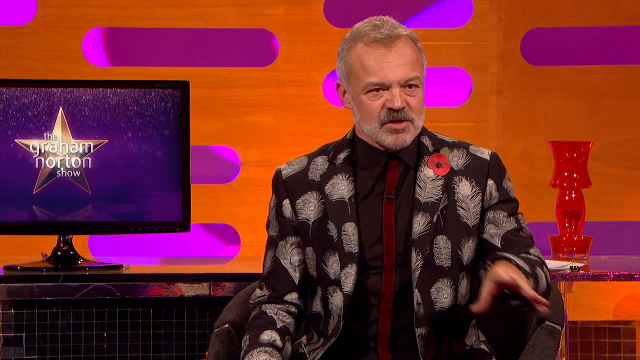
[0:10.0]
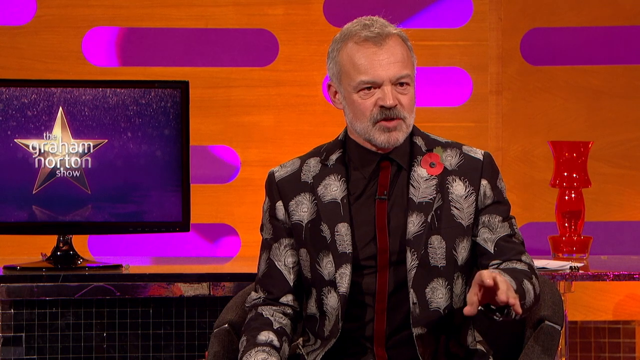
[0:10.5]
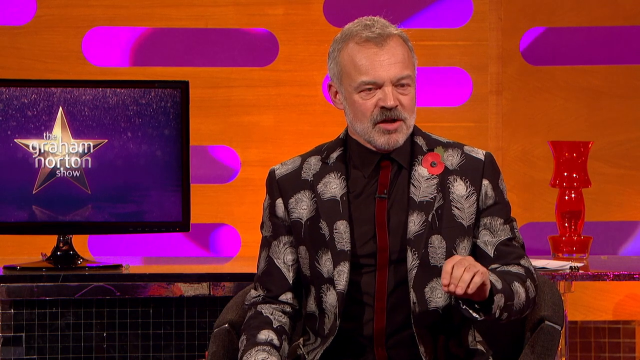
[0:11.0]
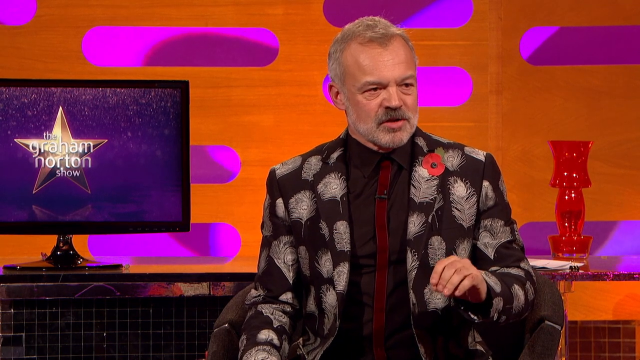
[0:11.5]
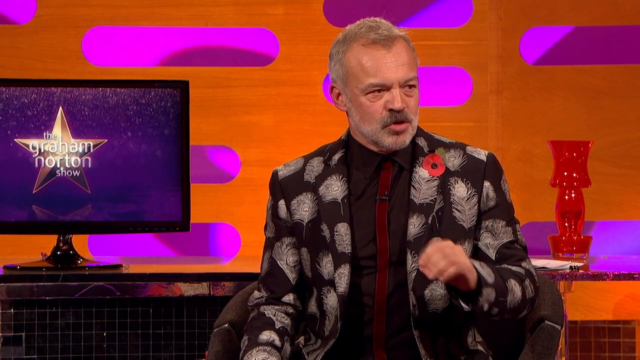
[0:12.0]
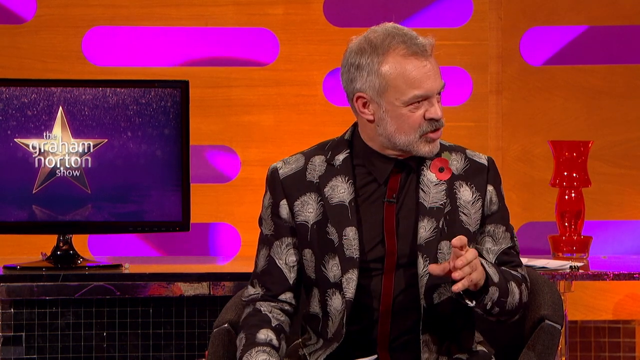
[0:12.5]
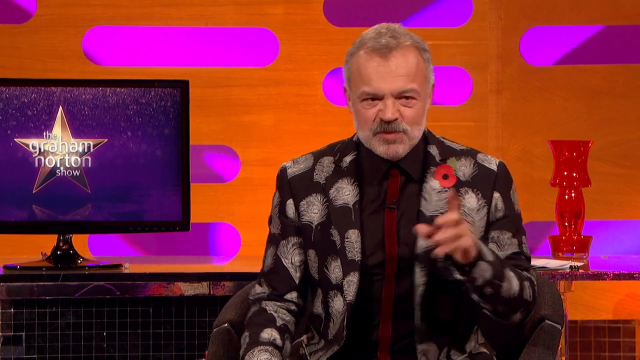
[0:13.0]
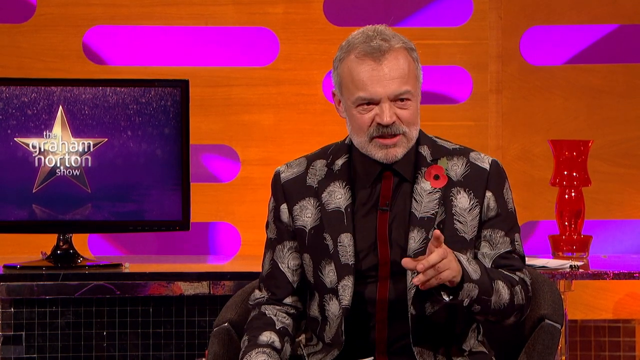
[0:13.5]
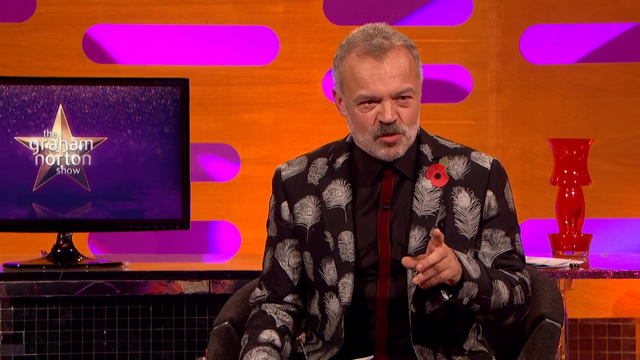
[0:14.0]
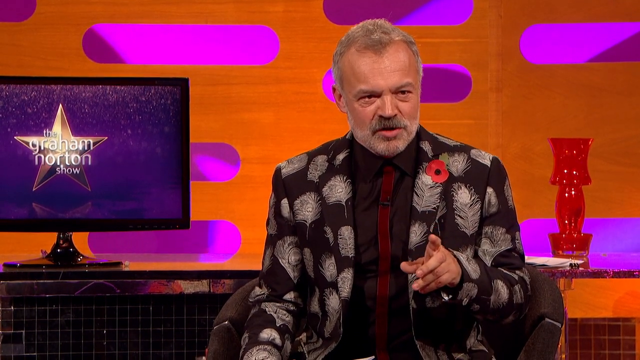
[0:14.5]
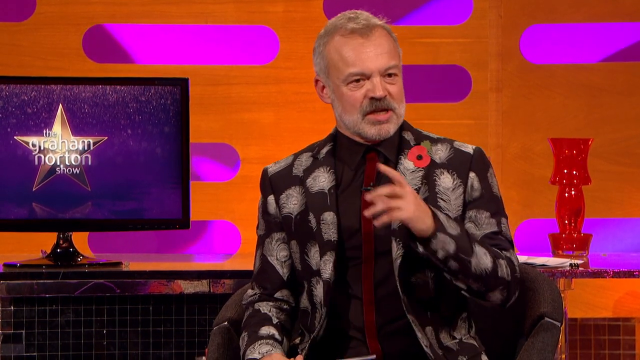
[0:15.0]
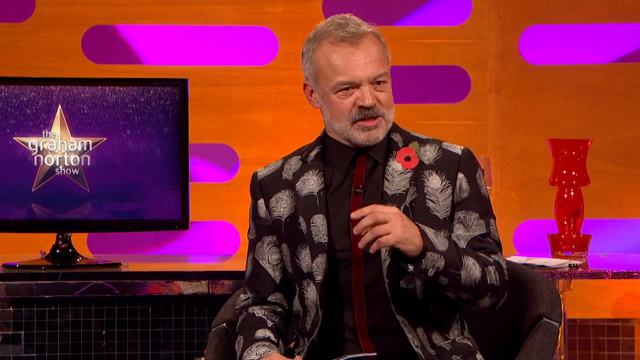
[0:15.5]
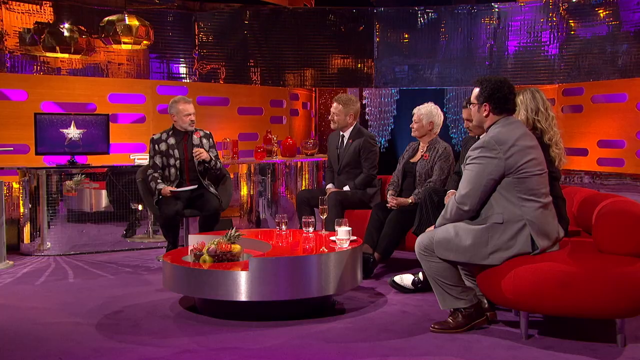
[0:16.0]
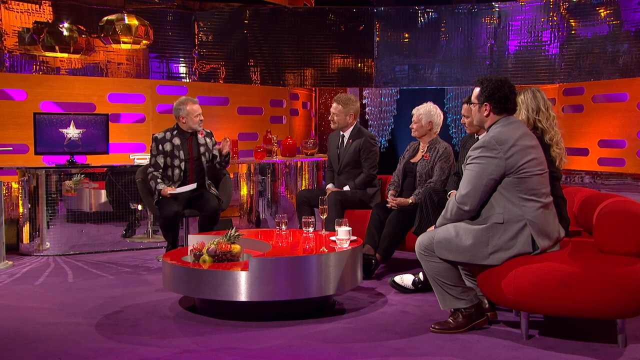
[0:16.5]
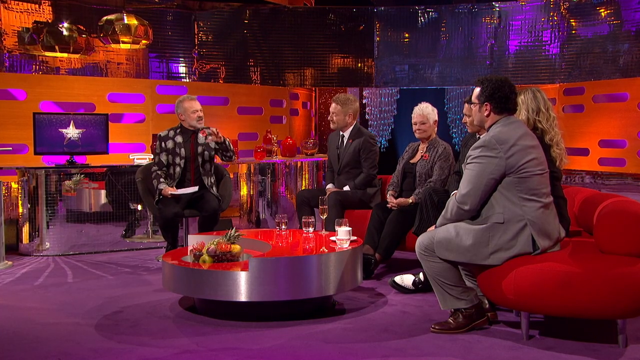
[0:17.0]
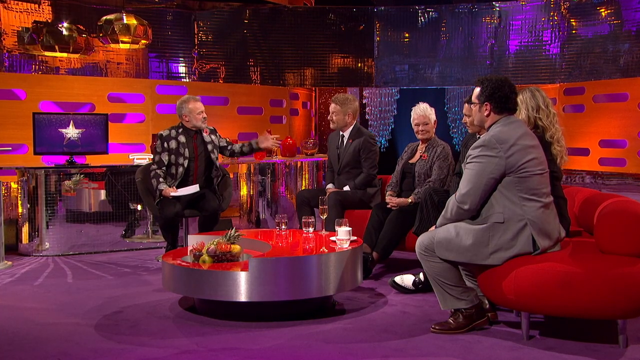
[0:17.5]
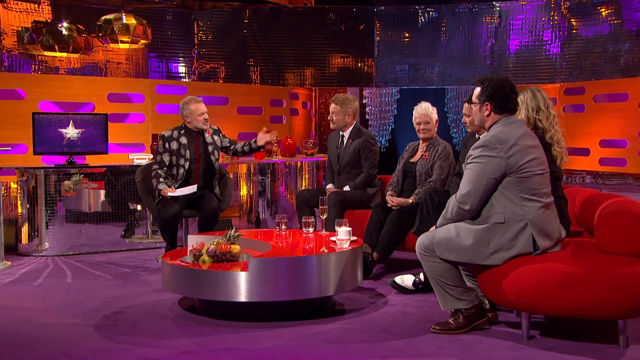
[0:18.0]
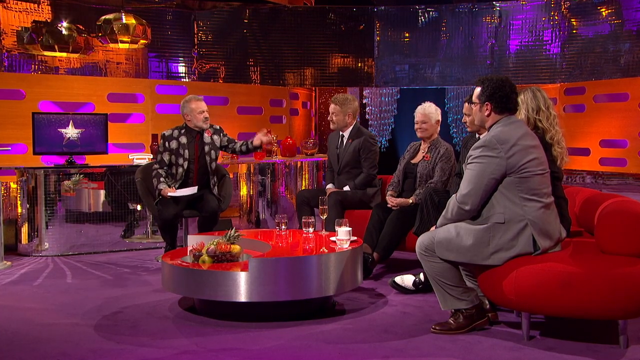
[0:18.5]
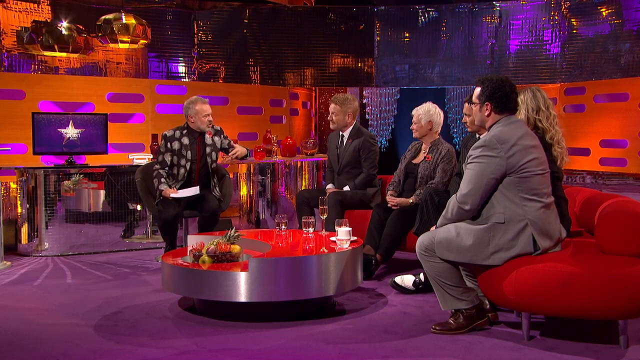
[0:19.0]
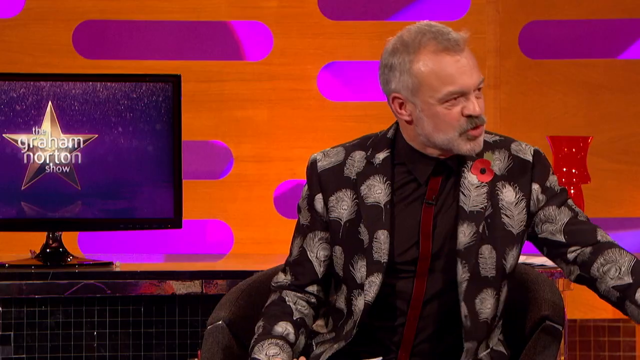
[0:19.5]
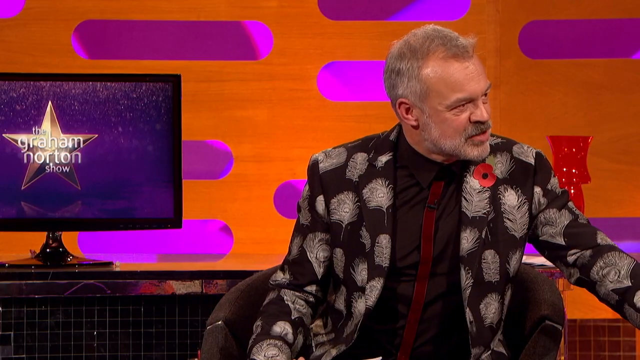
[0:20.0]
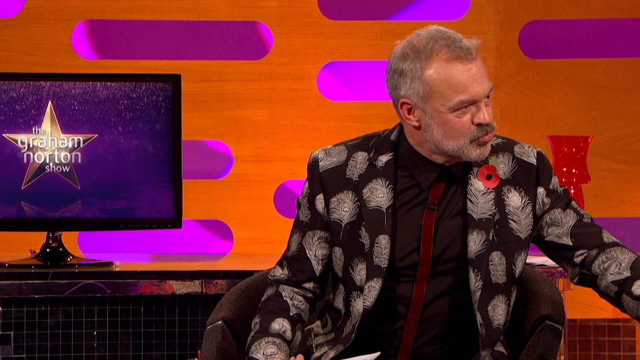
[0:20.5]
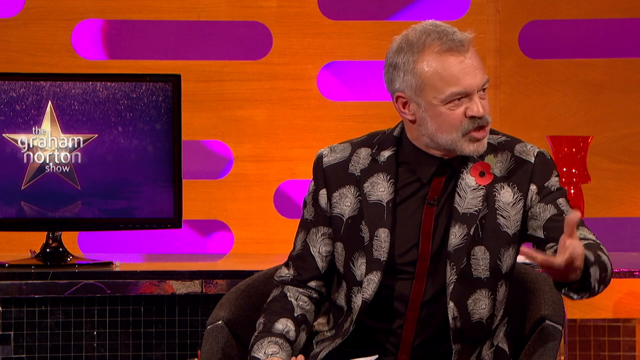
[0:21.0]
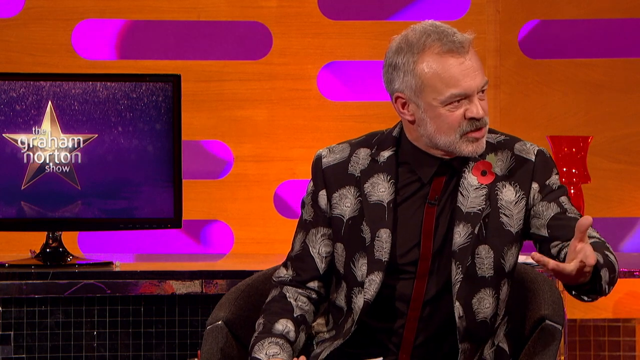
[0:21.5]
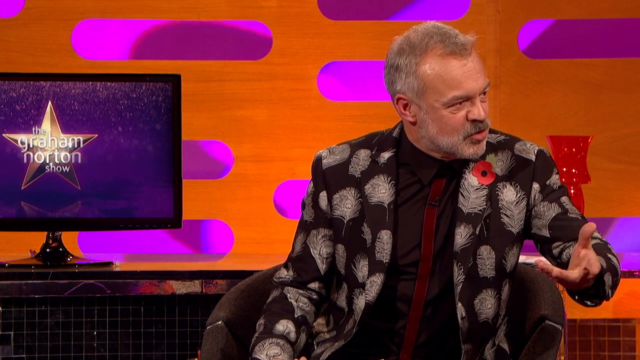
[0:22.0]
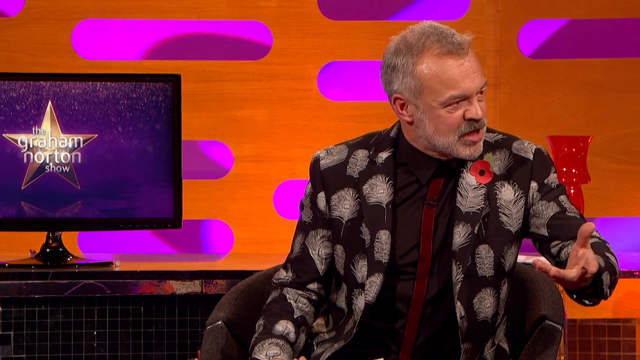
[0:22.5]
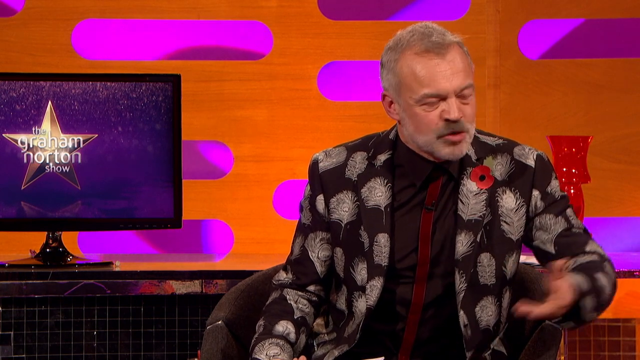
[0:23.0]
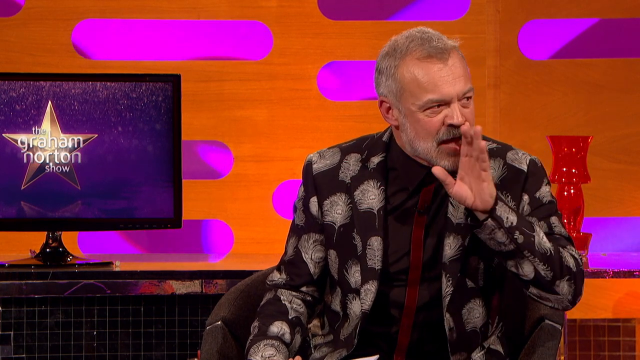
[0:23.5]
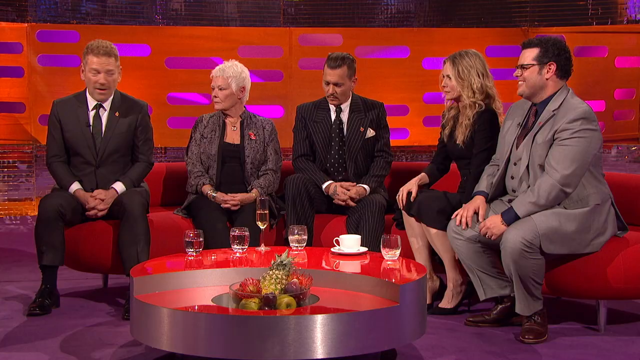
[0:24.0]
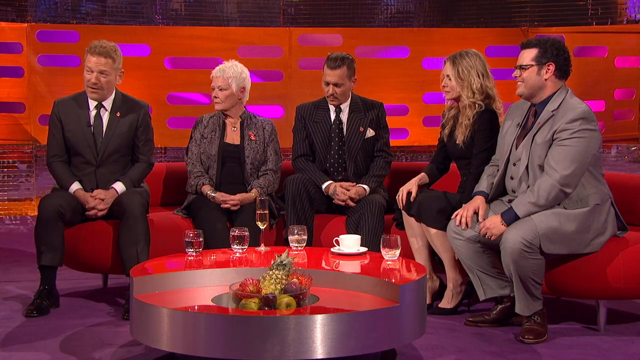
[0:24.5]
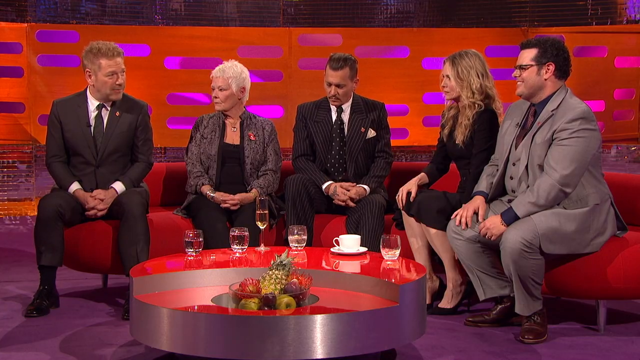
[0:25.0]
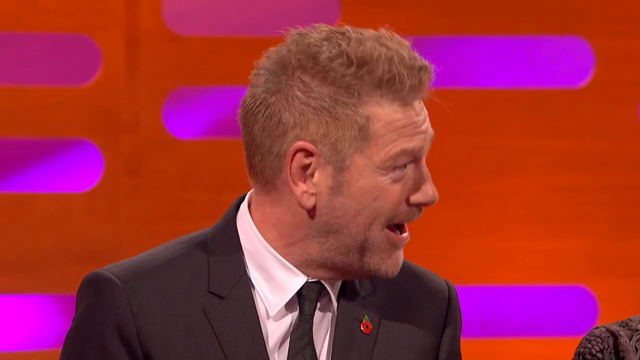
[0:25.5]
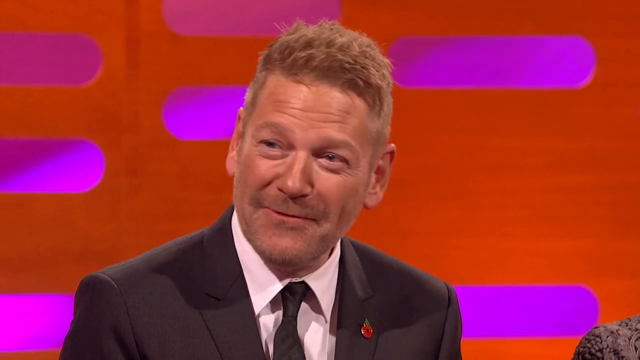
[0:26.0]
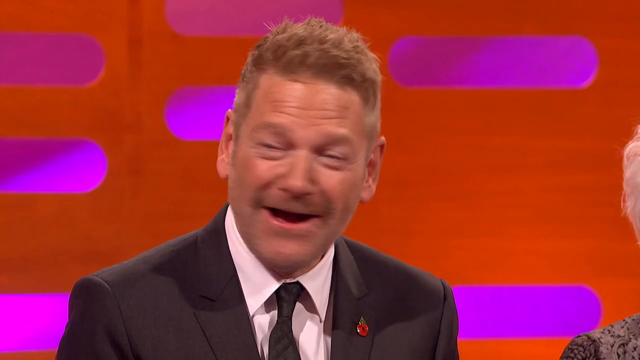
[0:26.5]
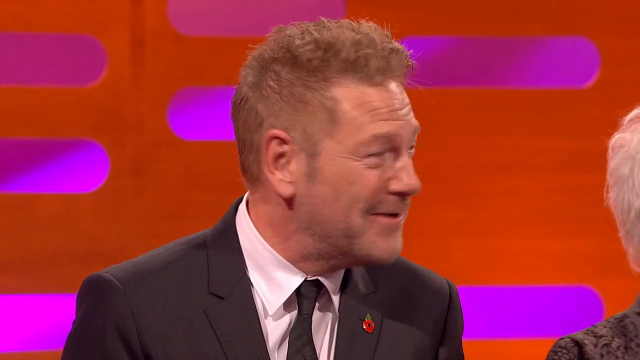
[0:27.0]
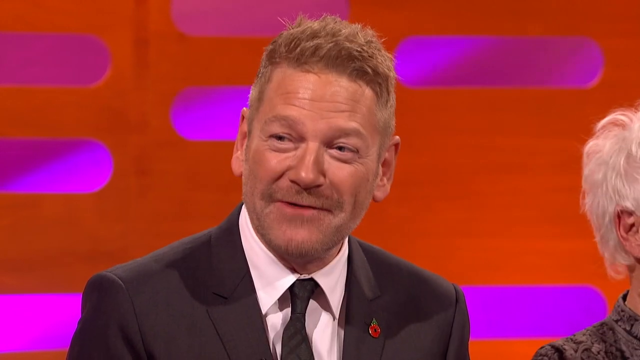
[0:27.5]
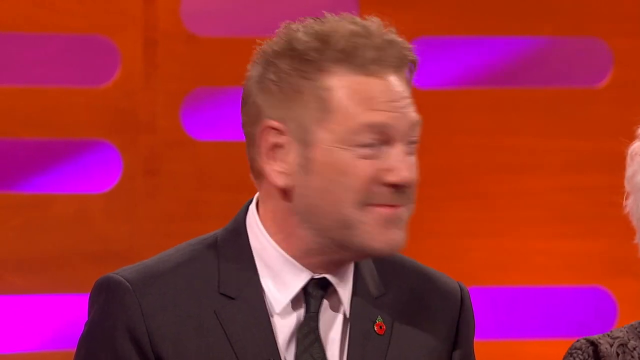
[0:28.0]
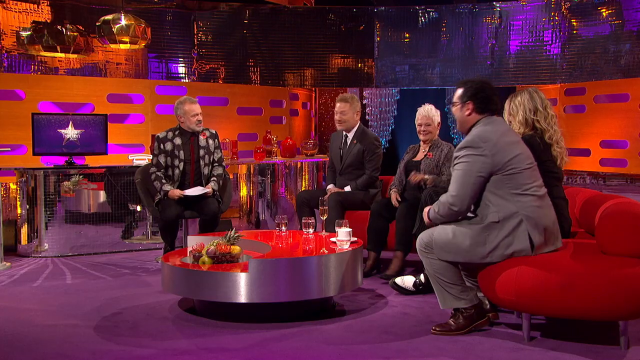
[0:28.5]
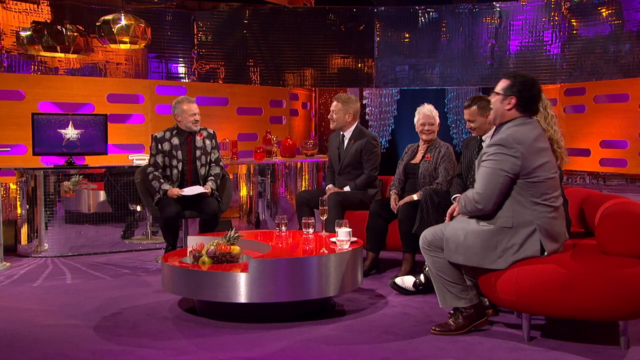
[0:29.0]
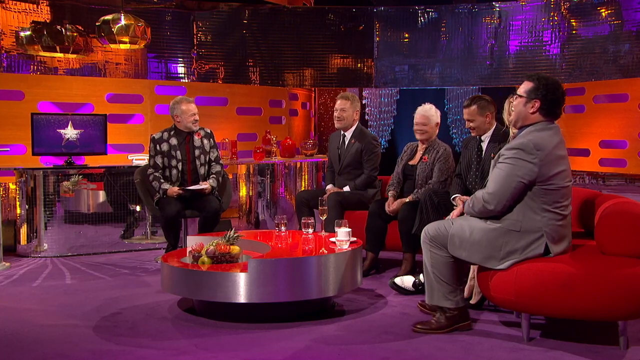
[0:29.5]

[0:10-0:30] The man in the suit keeps speaking to the people on the couch, gesturing with his left hand and darting his head back and forth, then pointing with his left hand as if speaking to someone or something. He leans back, and the camera pans to the whole group, showing him holding a white piece of paper in his right hand while speaking toward the man on the left of the couch, who wears a black suit and has short red hair that is kind of spiked up. The camera pans back to the man in the feather suit with the paper in his hand; he gestures with his left hand in a way that looks confused, like a "what are you doing" gesture, then puts his hand toward his mouth as if telling someone to shush. The camera pans back to the group: the man in the black suit with red hair is speaking, the man on the right side of the screen in a gray suit is smiling, and nobody else seems to be smiling. The camera then shows only the red-haired man, smiling and speaking. Back on the whole group, everybody seems to be smiling and the man in the gray suit is laughing. The woman with short white hair looks at Johnny Depp and smiles, while Johnny Depp looks a little downward, toward the table, smiling. They all seem pretty happy.